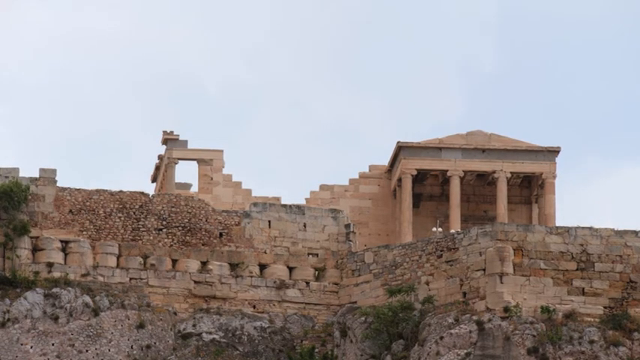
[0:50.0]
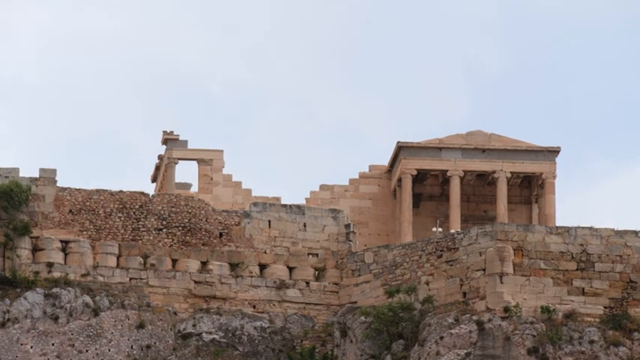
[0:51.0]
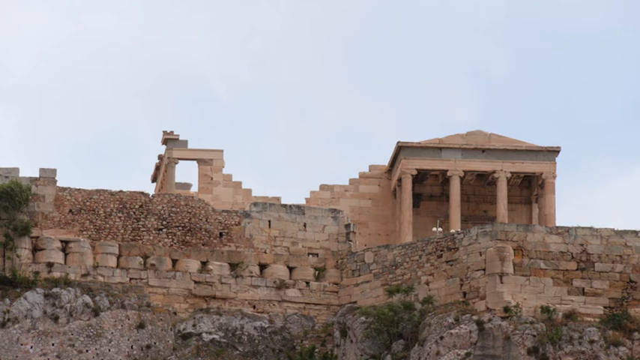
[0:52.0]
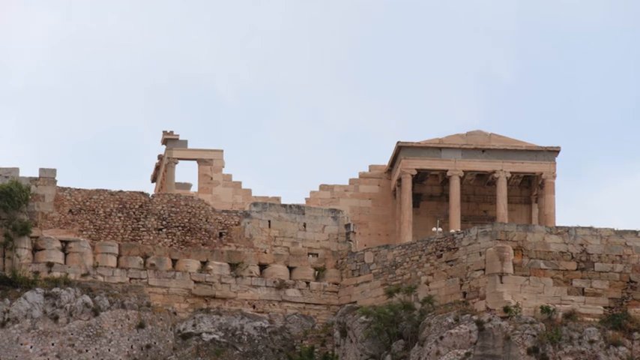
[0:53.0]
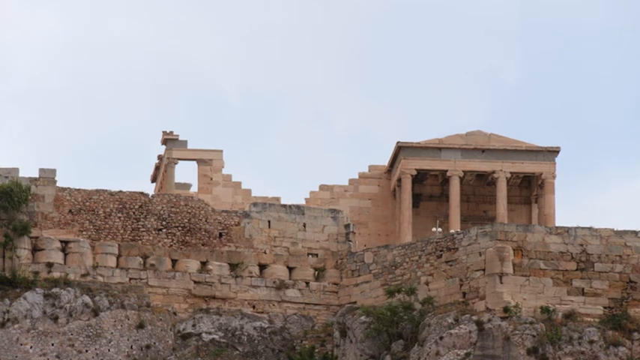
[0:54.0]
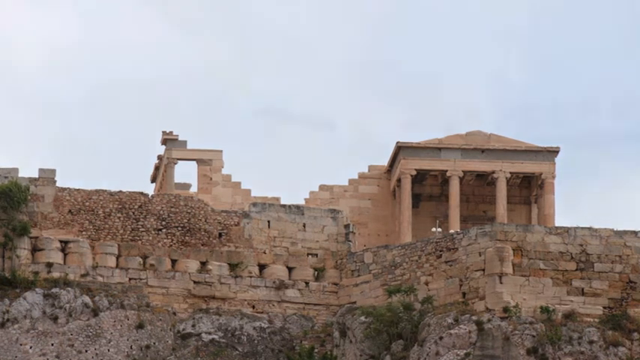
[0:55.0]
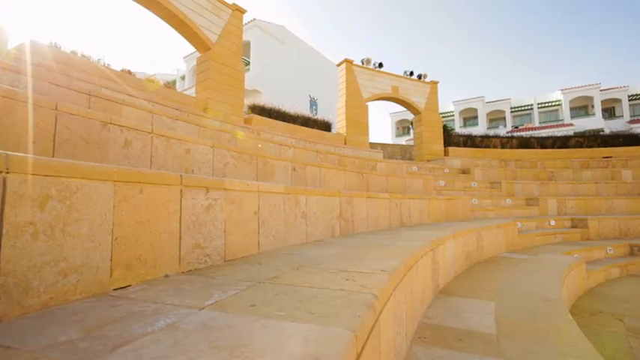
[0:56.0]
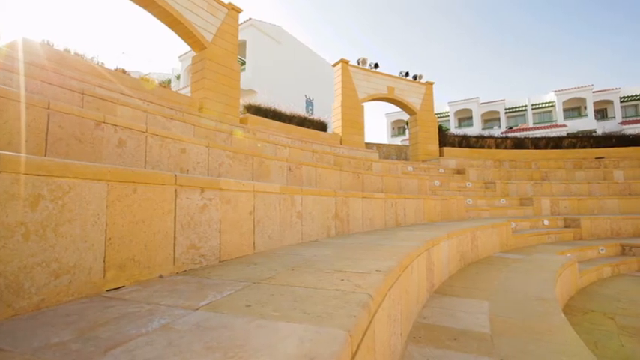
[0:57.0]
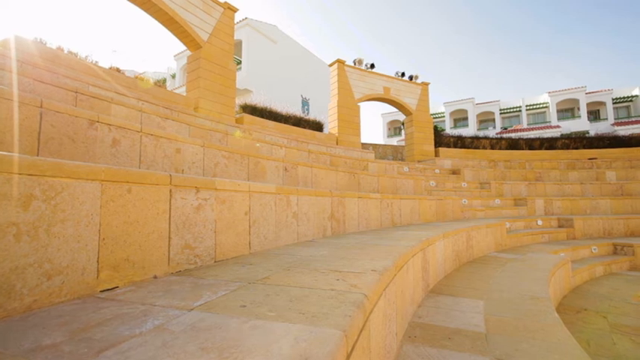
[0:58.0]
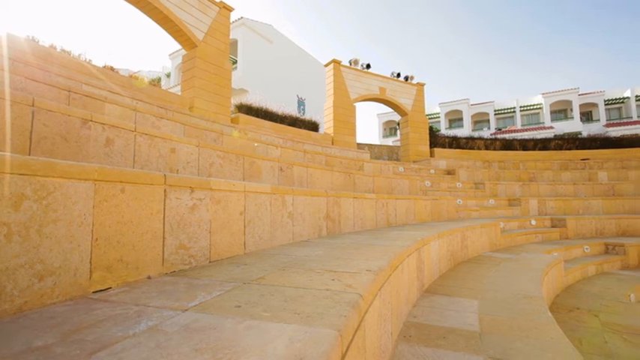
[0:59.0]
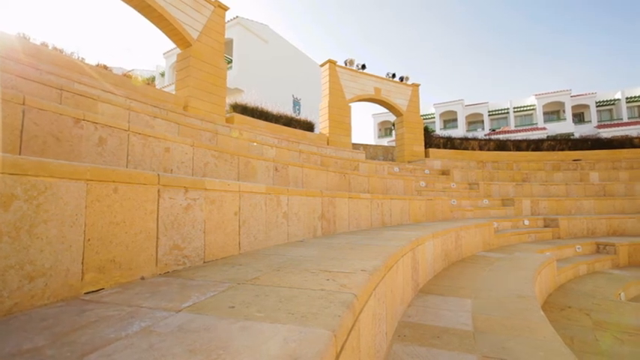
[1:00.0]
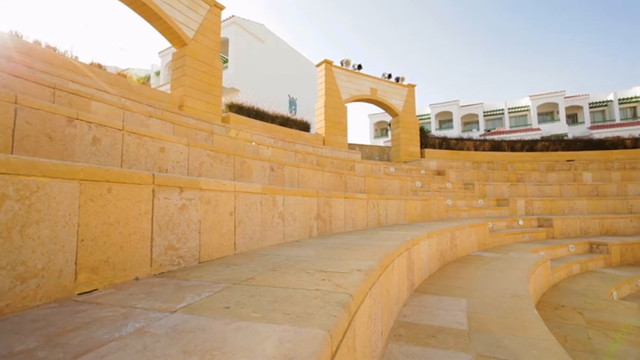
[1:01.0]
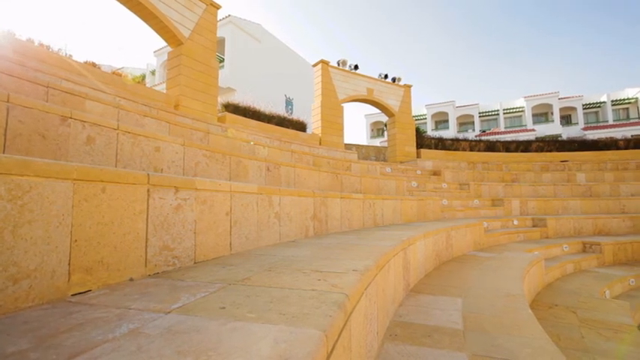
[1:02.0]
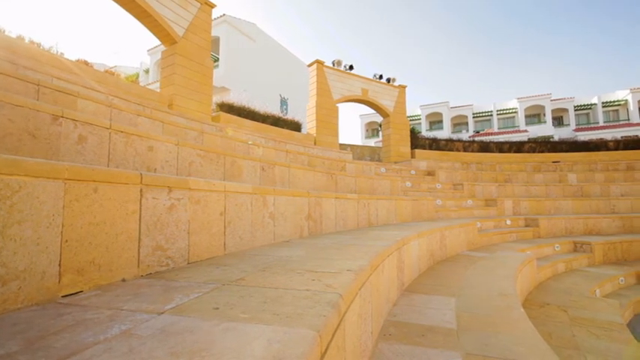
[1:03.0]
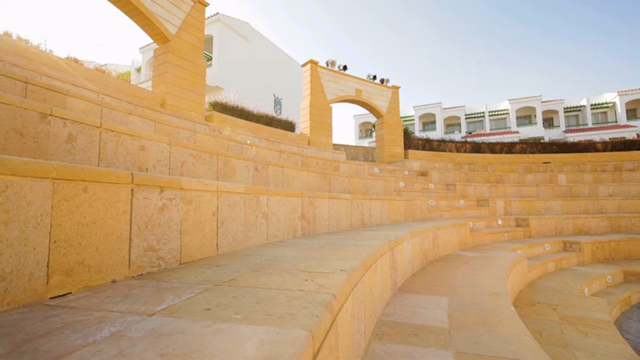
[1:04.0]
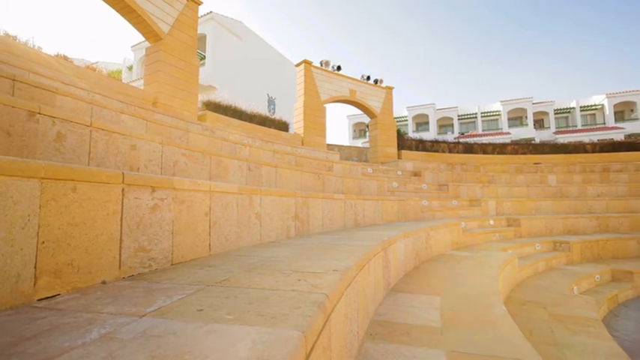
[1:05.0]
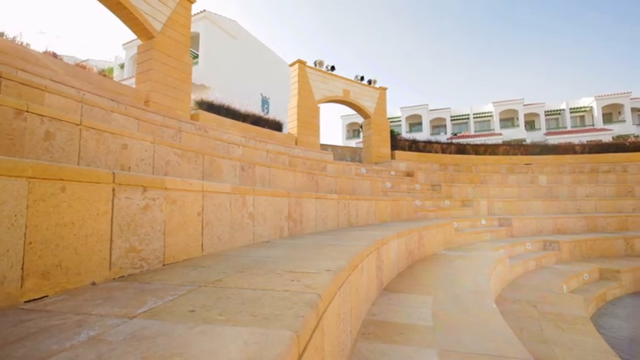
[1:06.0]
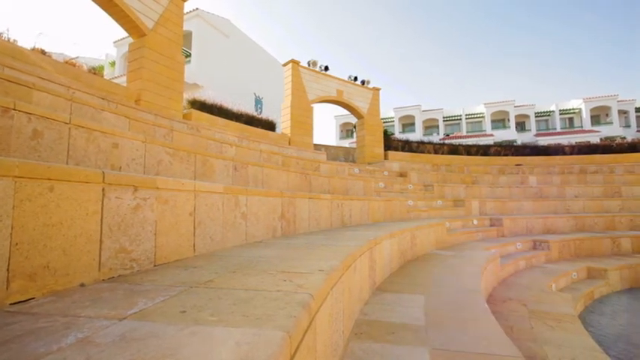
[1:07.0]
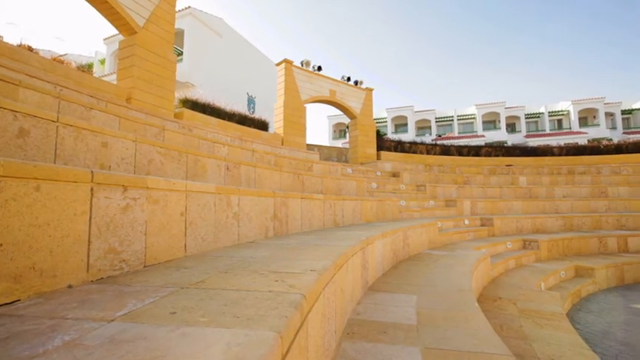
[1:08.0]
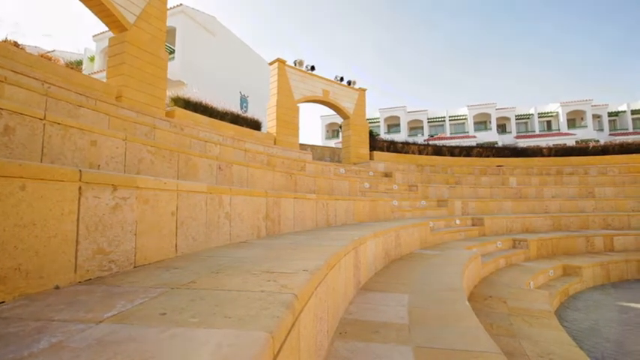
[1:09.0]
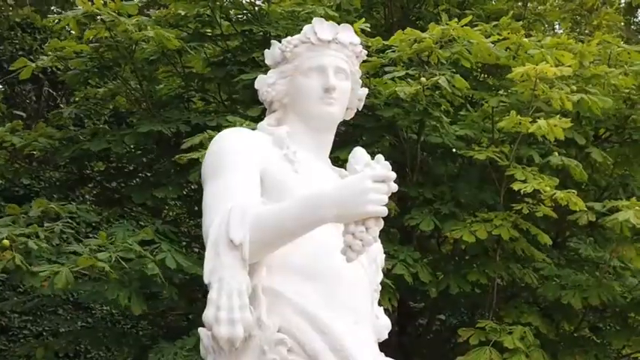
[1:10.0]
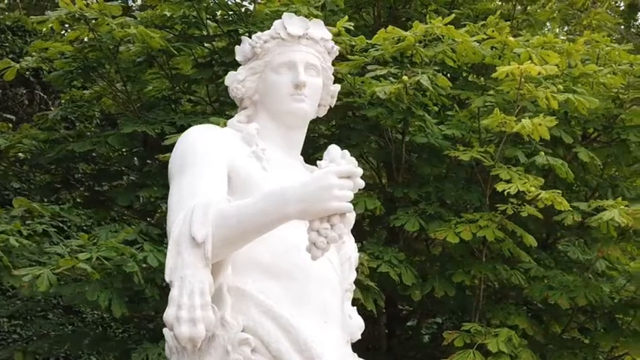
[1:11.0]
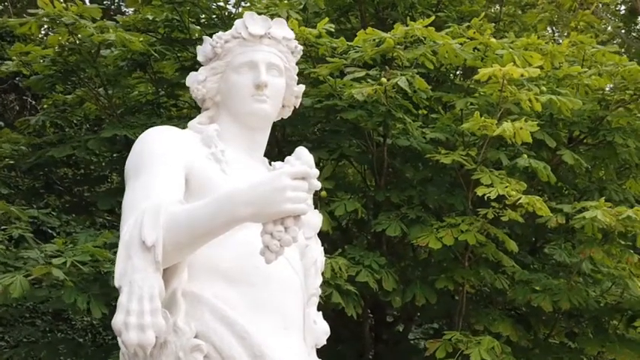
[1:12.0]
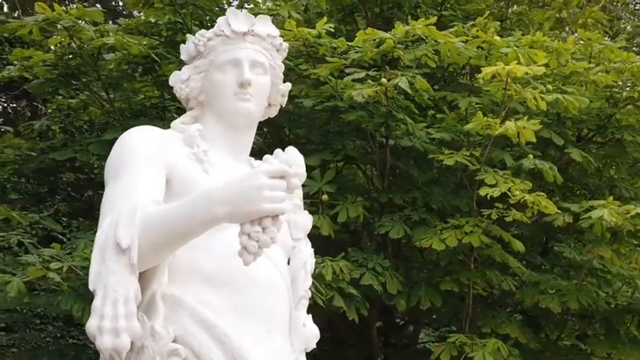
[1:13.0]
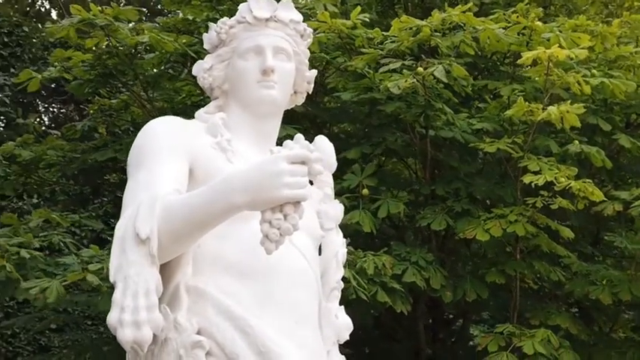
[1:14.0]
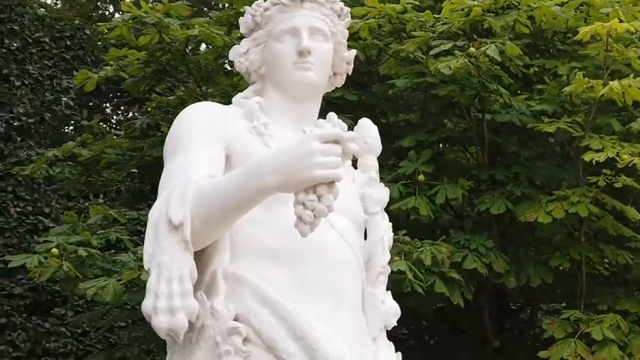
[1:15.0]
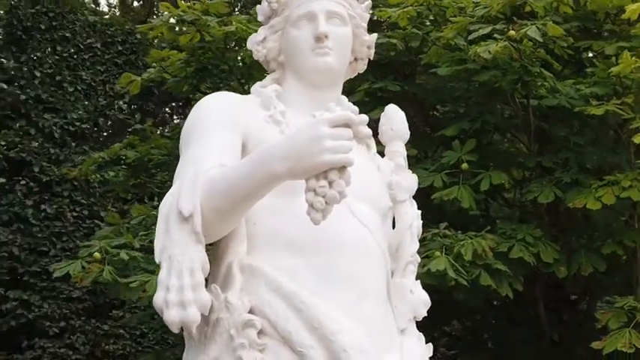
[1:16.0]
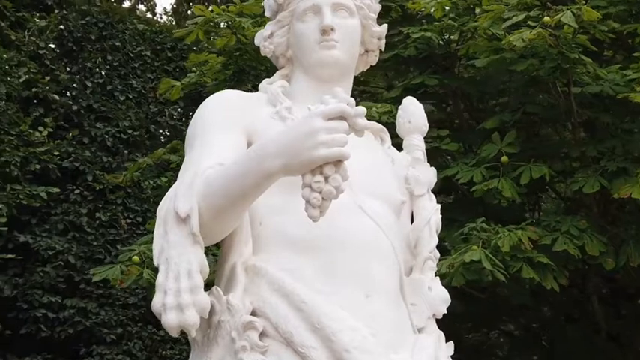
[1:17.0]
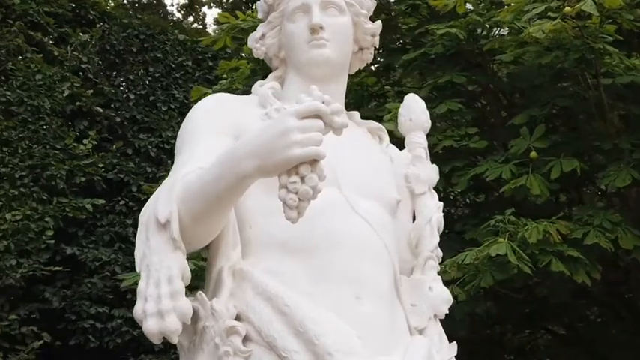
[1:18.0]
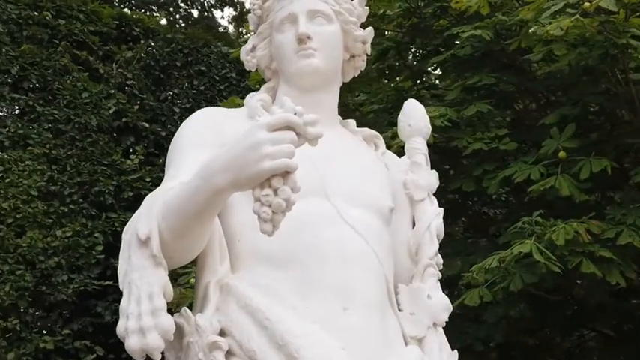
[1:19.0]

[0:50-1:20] Parts of an ancient Greek building appear, along with an outdoor amphitheatre. The seats or steps of the amphitheatre are covered in sandstone, and there are archways along the top row on its perimeter. In the background are white residential-type buildings, each with balconies looking out. The scene then transitions to another white marble statue of a figure holding a bunch of grapes in one hand. The figure has long, flowing hair, with a single curly strand over the right shoulder, and lush green vegetation is behind the statue, which appears to stand in a well-maintained park. The figure is most probably Dionysus: as the camera rotates around the statue, he is seen standing bare-chested, and in his other arm is a sceptre with grape vines wrapped around it.